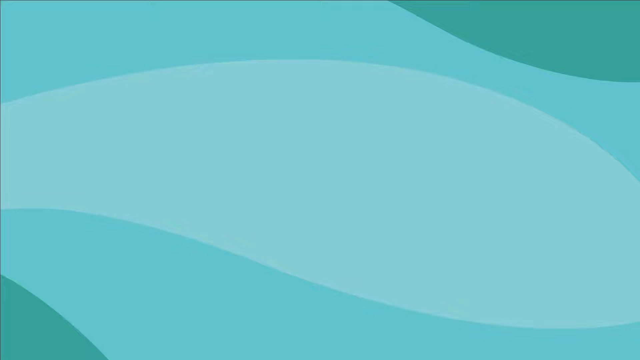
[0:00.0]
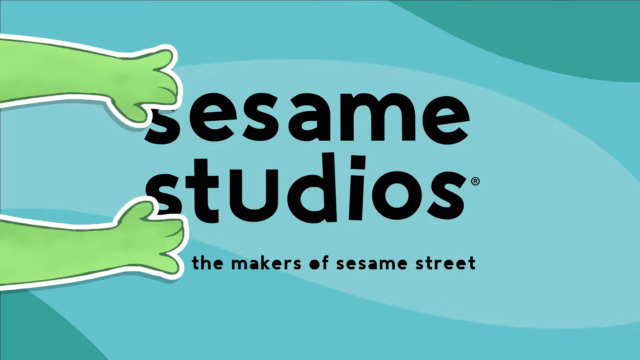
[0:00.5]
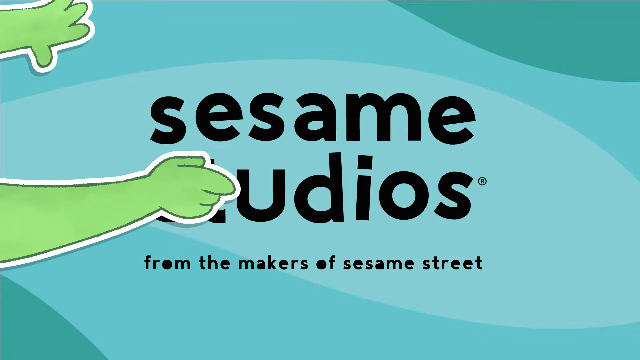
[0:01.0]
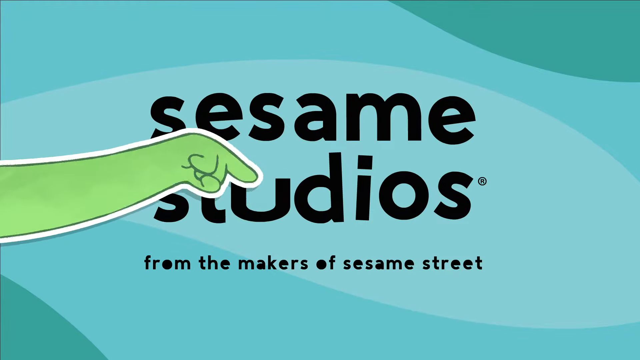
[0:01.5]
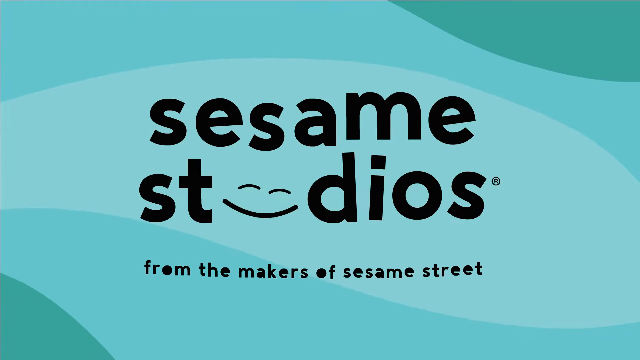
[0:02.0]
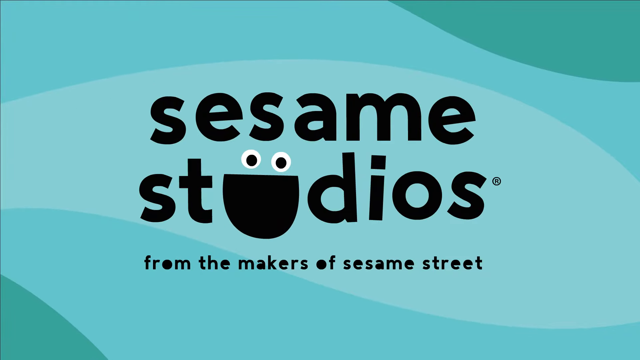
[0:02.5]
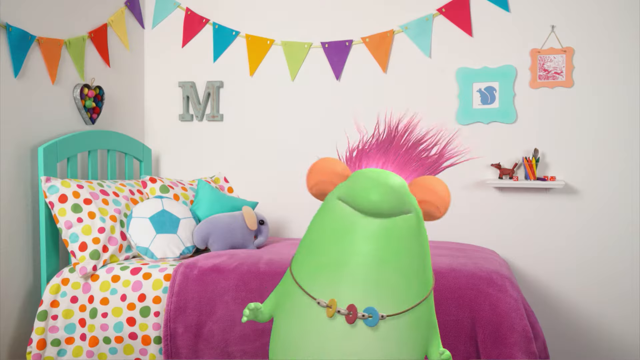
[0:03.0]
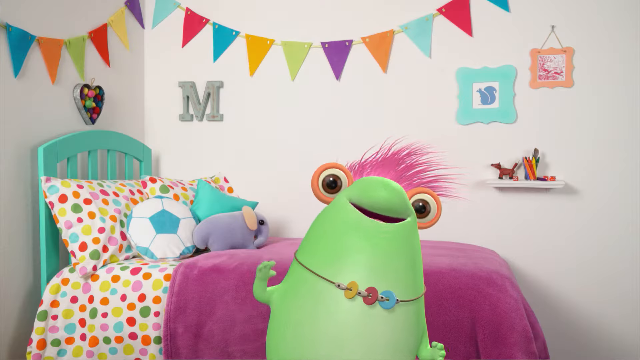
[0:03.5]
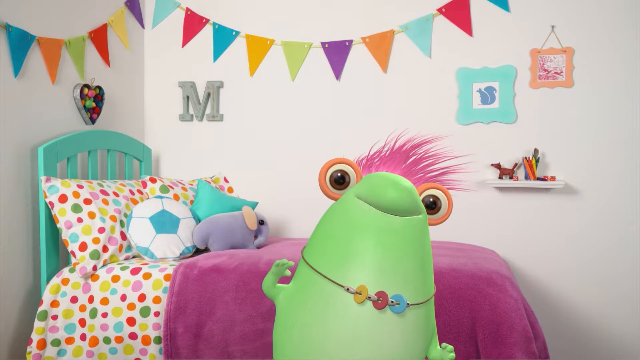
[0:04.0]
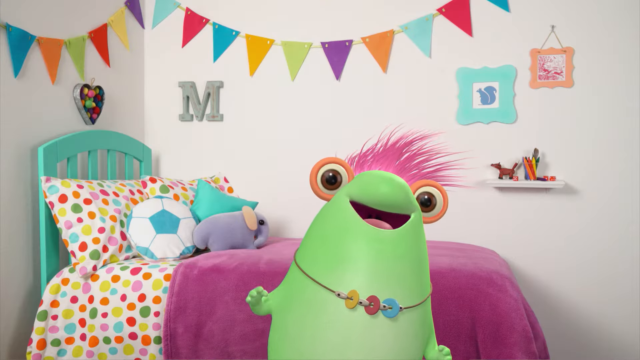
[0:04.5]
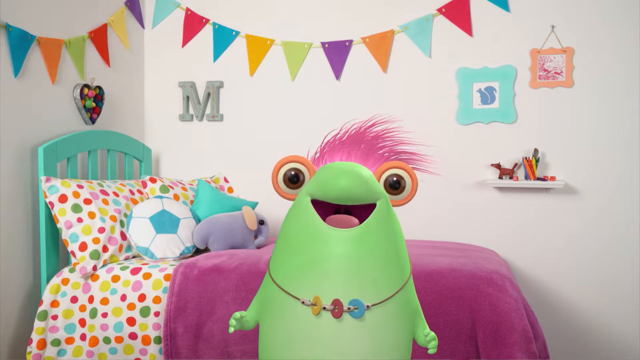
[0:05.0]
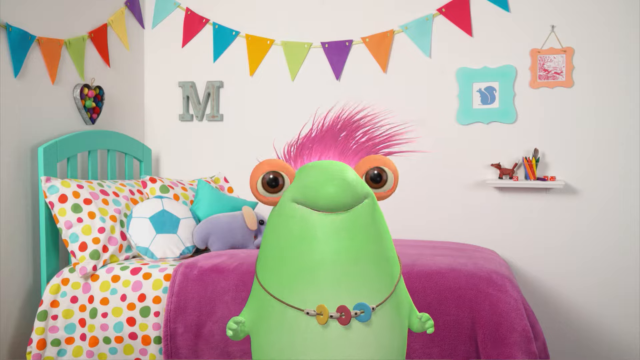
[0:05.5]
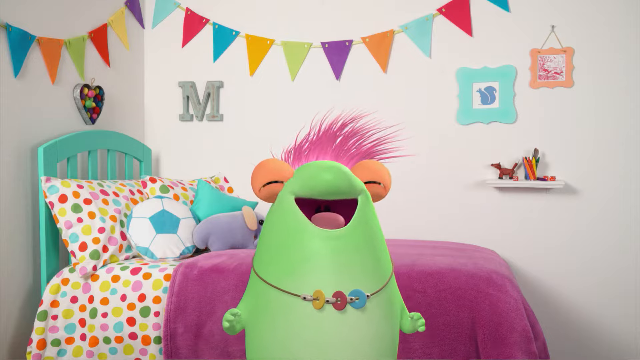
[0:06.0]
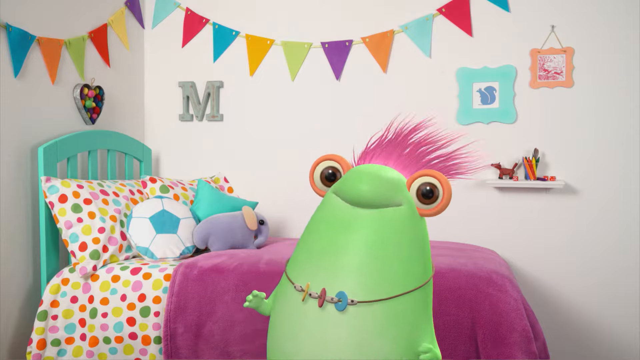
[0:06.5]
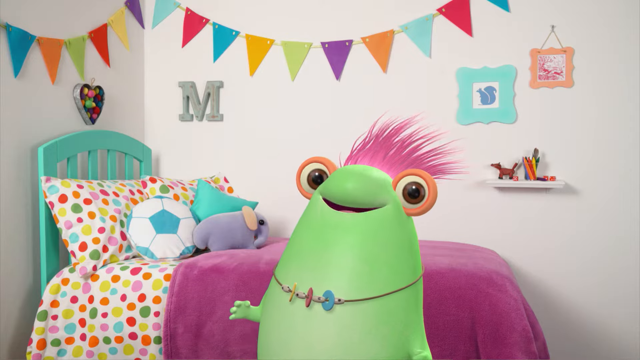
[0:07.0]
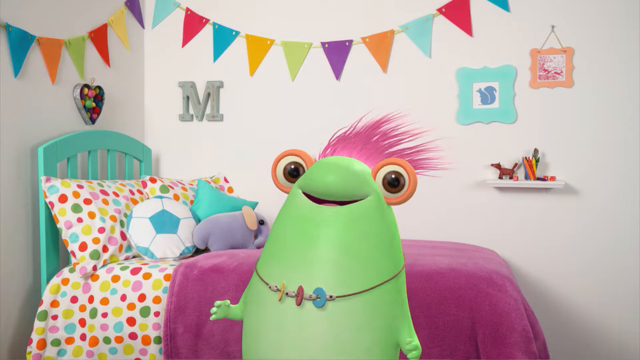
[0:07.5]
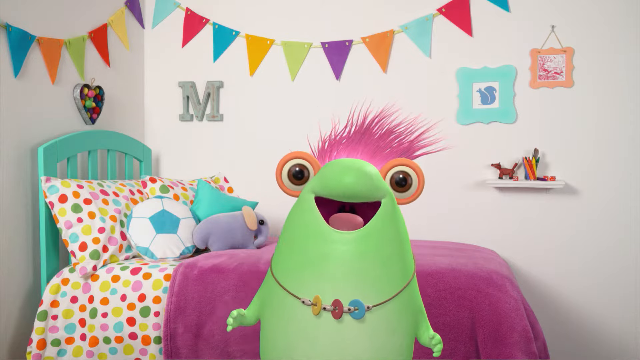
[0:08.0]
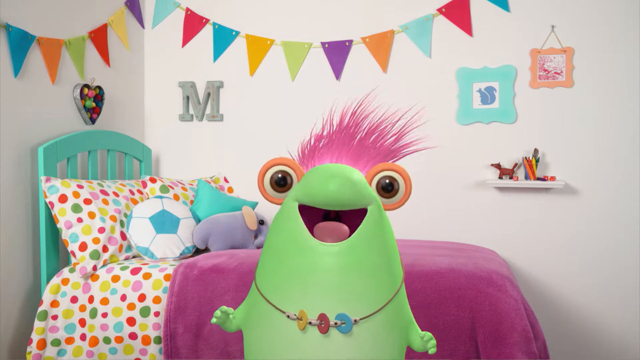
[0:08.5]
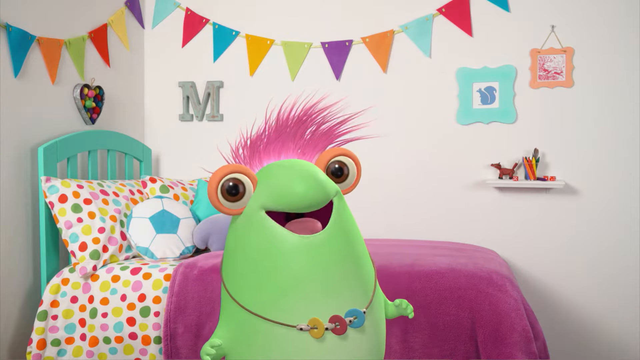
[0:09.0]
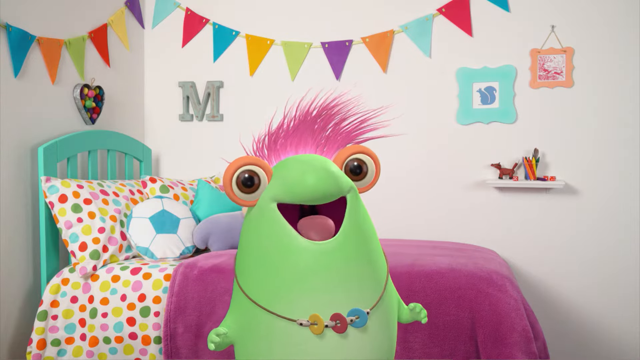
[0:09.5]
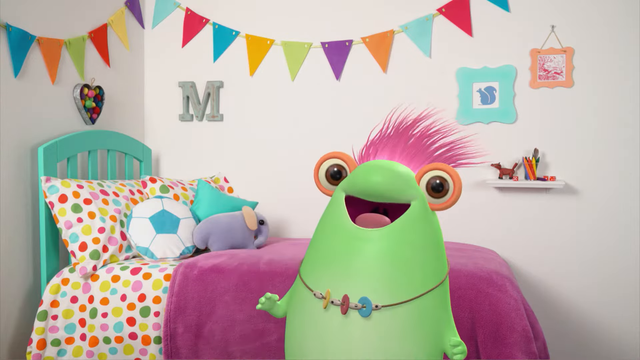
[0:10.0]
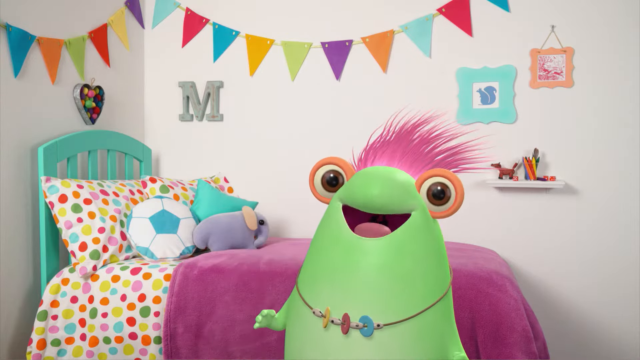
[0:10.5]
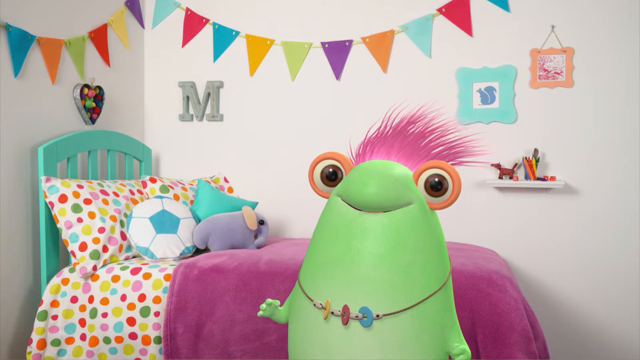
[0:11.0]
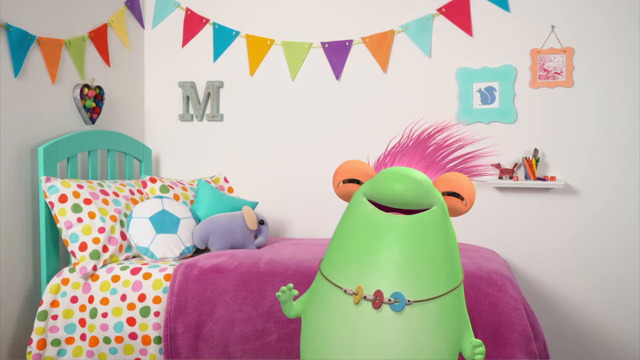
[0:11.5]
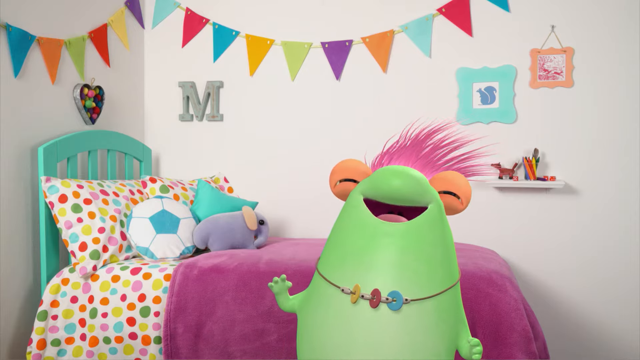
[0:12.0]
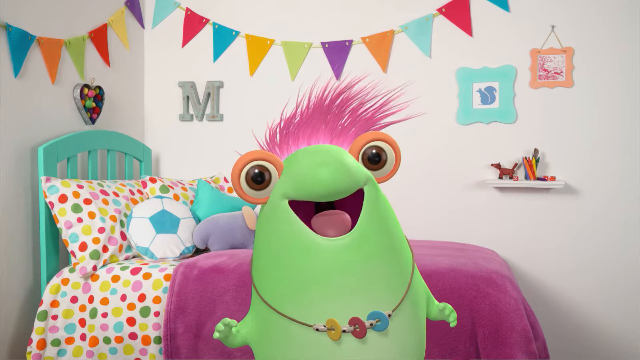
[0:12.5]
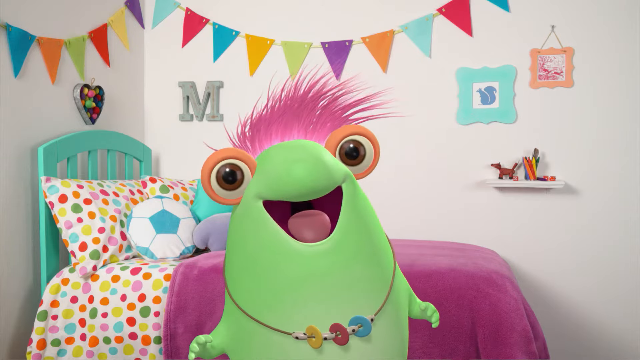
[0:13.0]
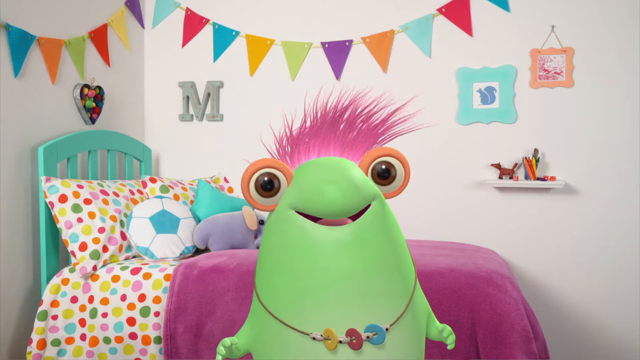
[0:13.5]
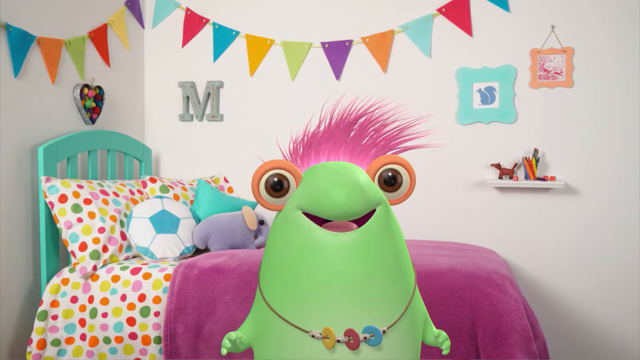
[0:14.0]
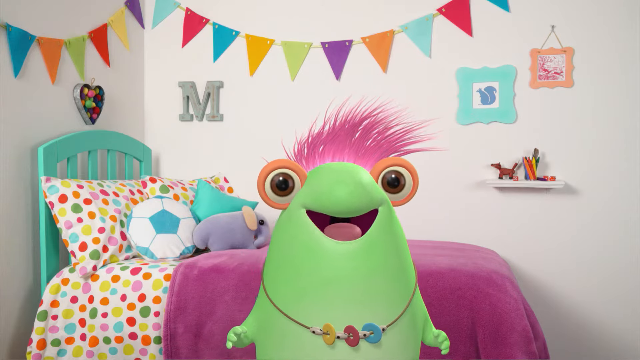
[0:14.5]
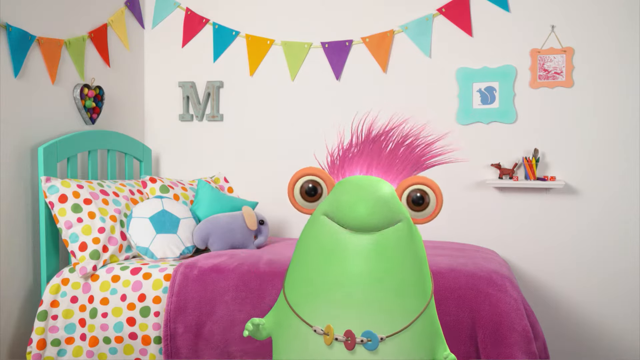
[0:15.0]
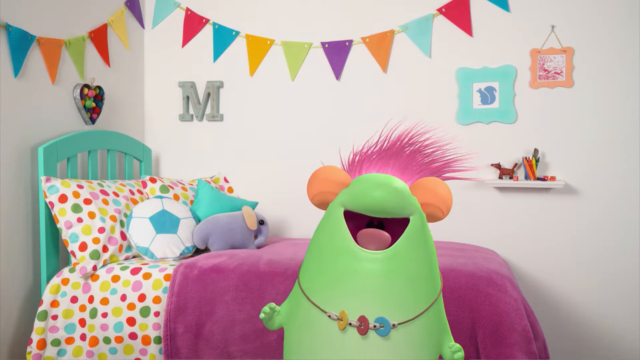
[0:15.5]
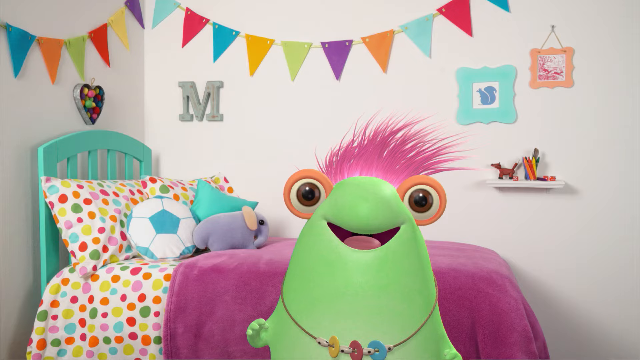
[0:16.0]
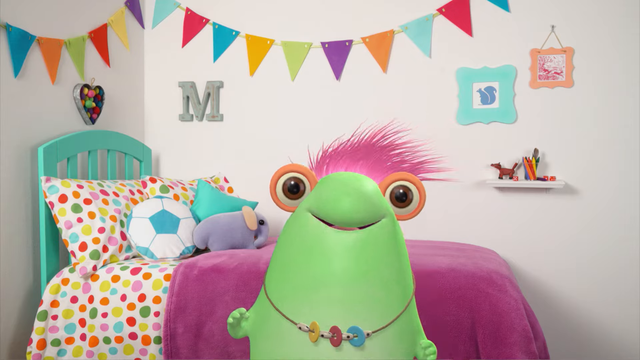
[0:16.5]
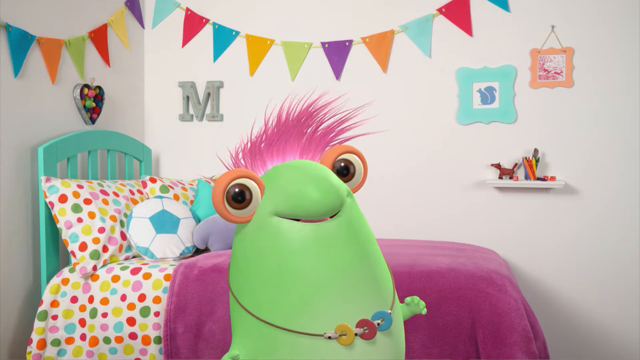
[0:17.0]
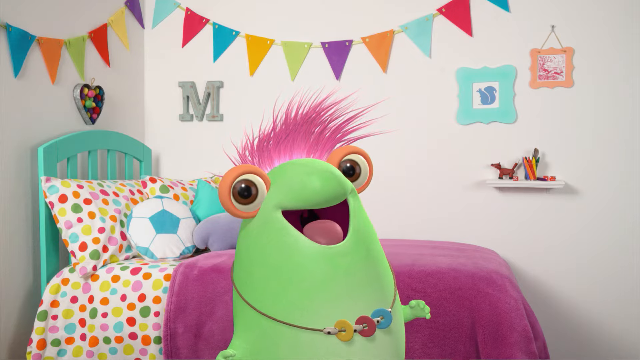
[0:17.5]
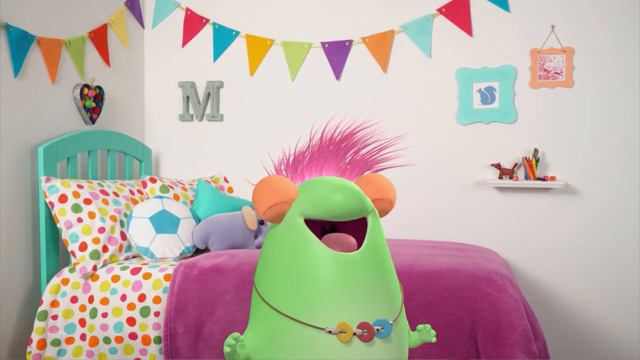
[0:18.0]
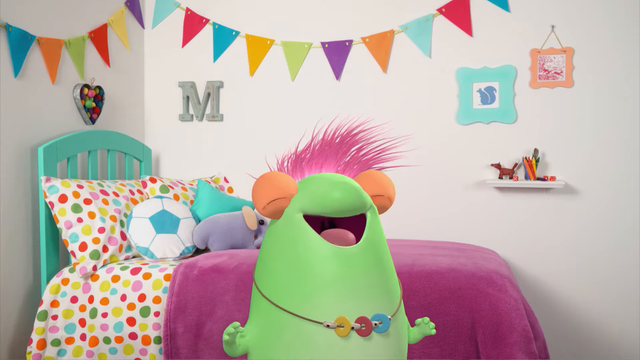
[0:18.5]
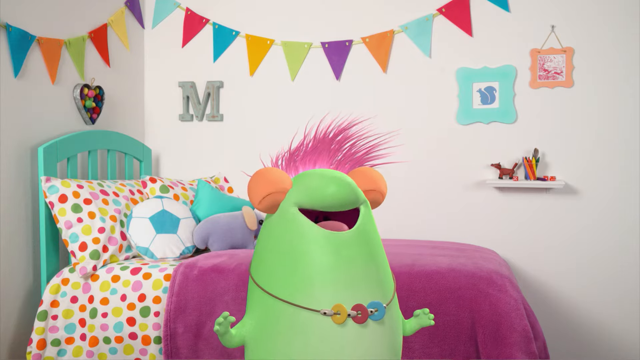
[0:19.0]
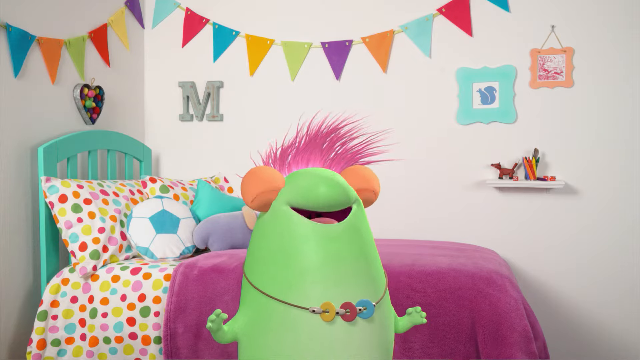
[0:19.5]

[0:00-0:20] The video opens with dark lettering that reads "Sesame Studios from the makers of Sesame Street." A puppet-like character then appears: he is green with pink hair, has orange around his eyes, which stick out from the top of his head, and wears a yellow, red and blue necklace. He talks to the camera as he moves around bit by bit. Behind him is a bed with polka dot sheets and pillowcases and a pink blanket, plus other pillows, one of which looks like a soccer ball. A heart-shaped object hangs above the bed. On the wall are flags of various colors, the letter M, and some hanging pictures.